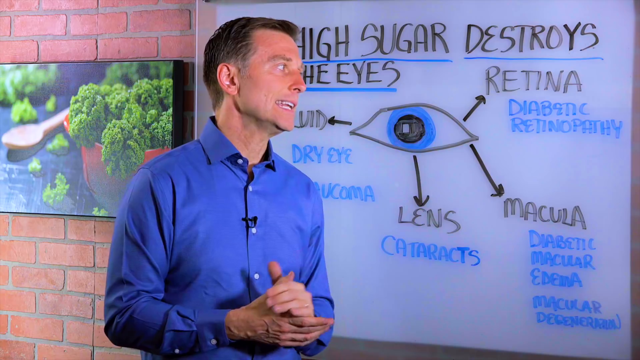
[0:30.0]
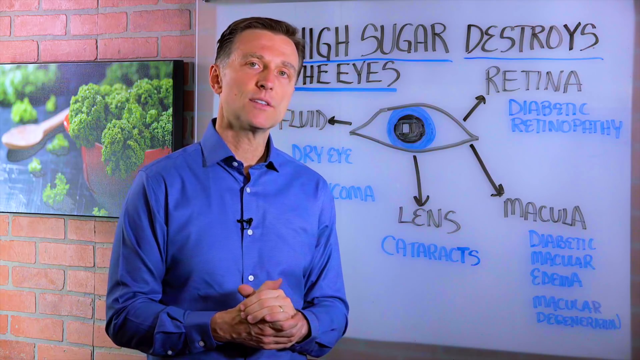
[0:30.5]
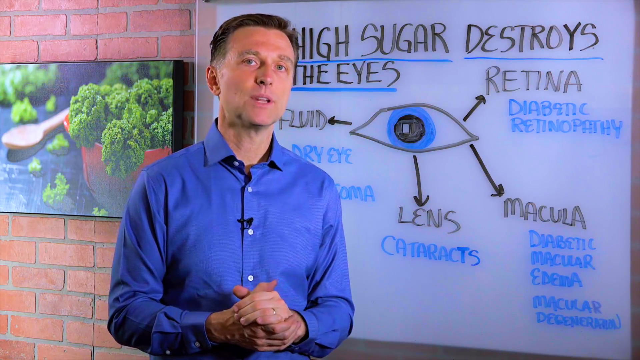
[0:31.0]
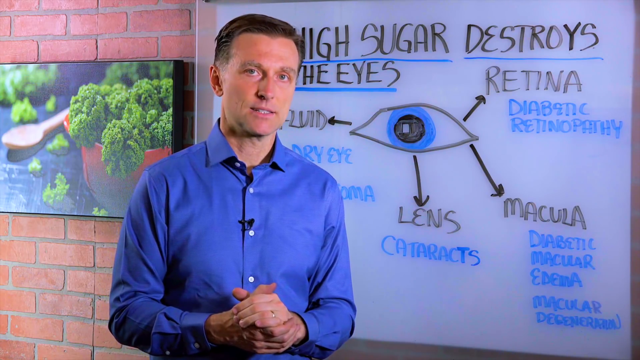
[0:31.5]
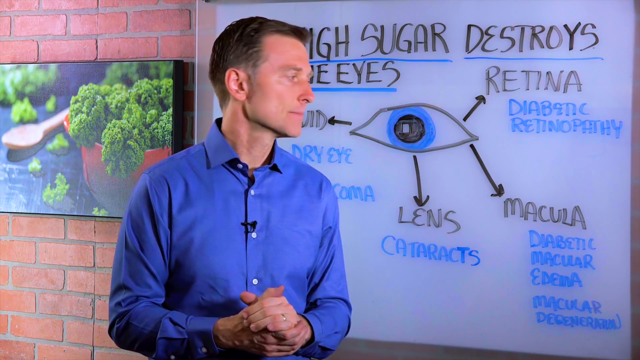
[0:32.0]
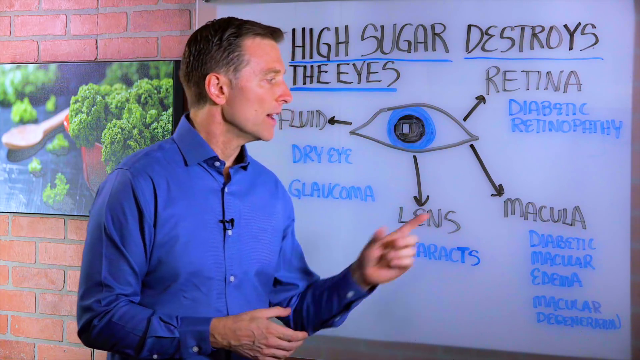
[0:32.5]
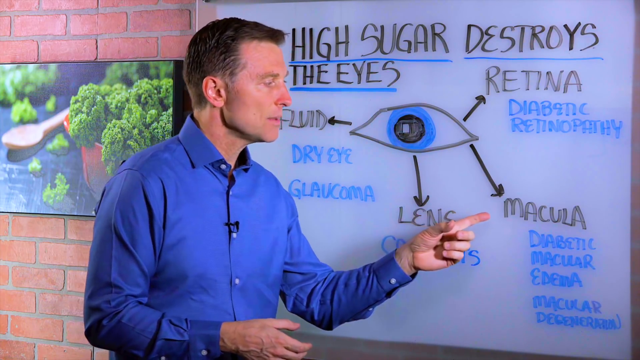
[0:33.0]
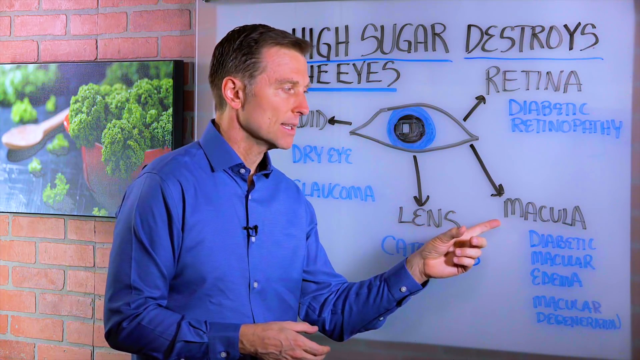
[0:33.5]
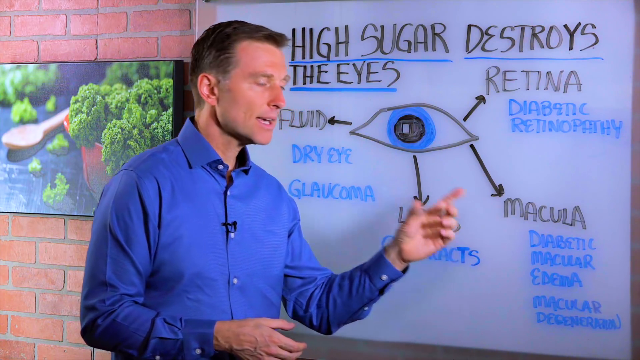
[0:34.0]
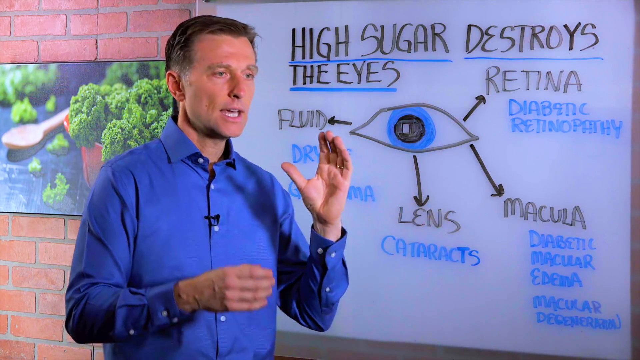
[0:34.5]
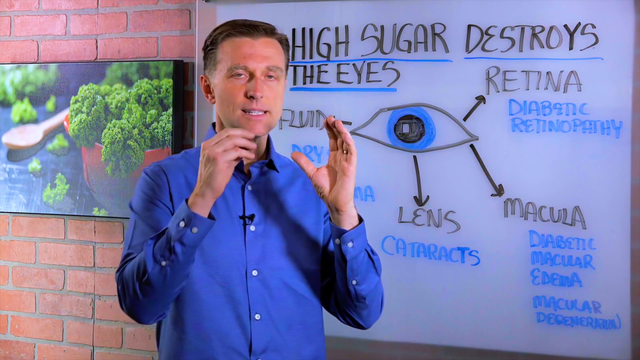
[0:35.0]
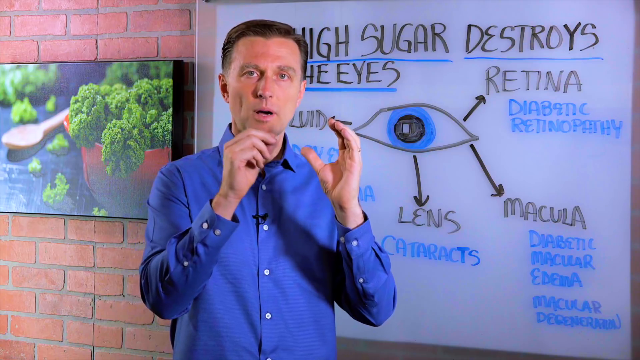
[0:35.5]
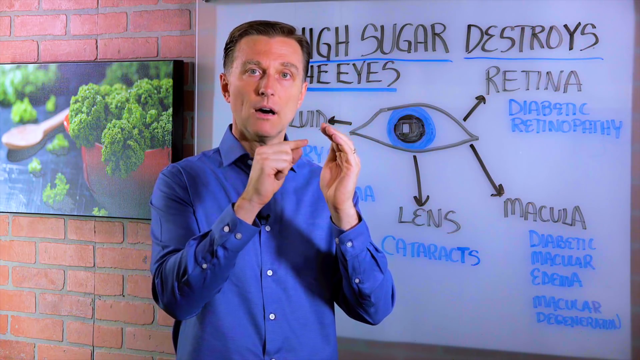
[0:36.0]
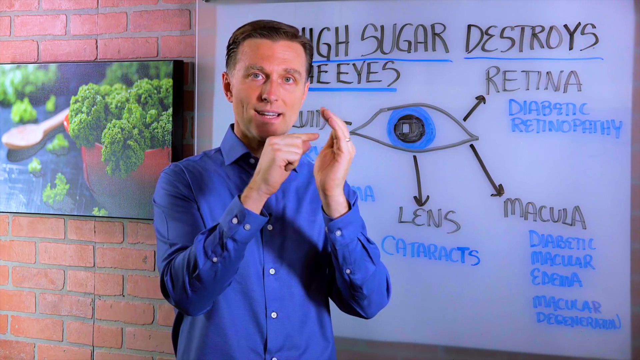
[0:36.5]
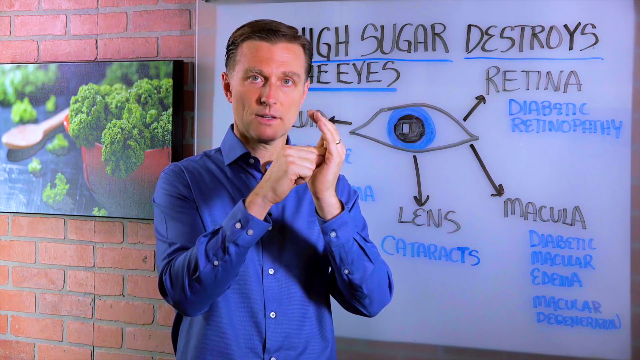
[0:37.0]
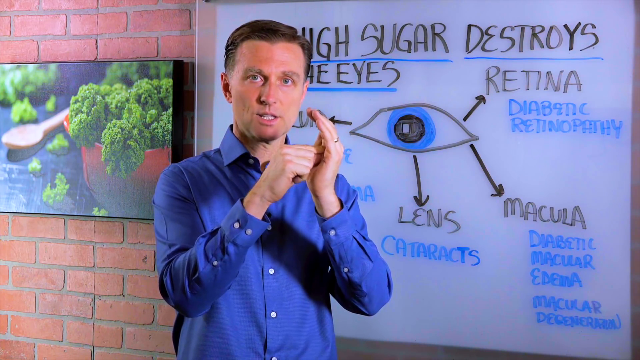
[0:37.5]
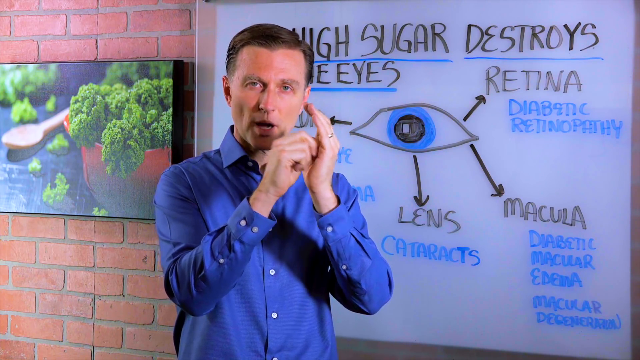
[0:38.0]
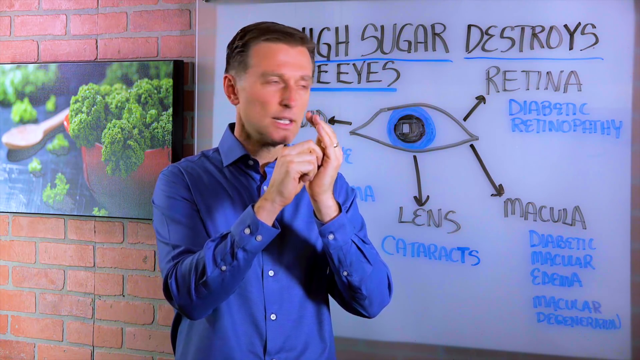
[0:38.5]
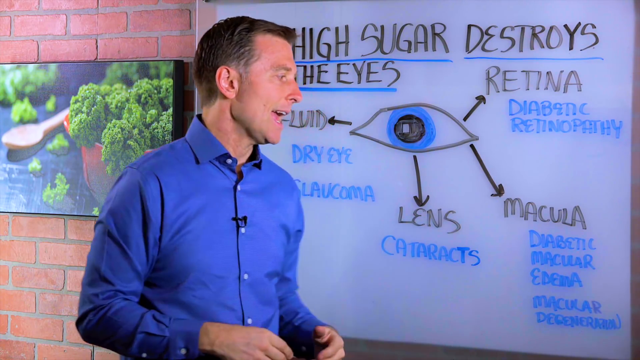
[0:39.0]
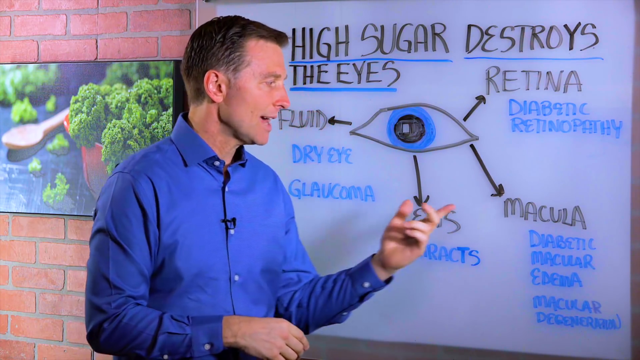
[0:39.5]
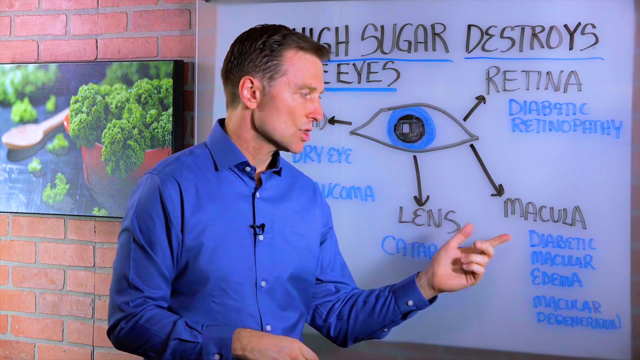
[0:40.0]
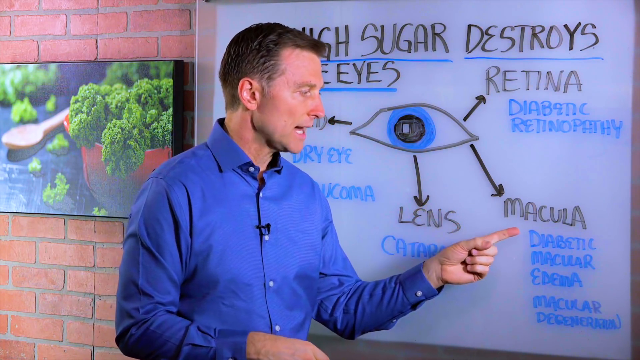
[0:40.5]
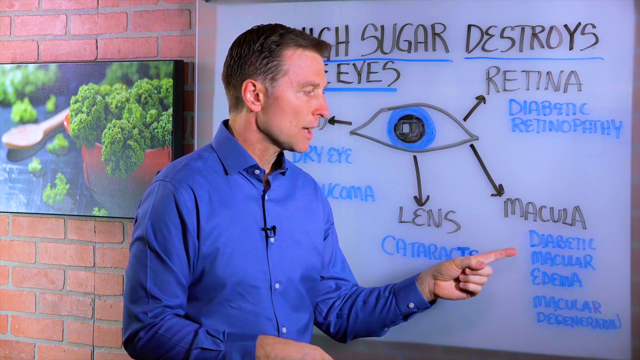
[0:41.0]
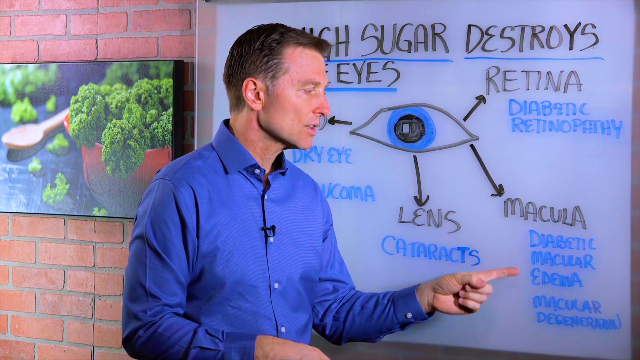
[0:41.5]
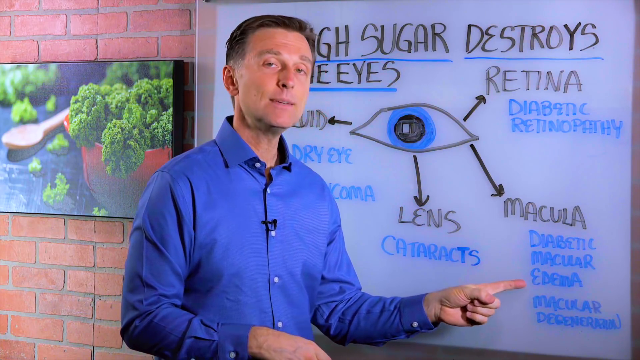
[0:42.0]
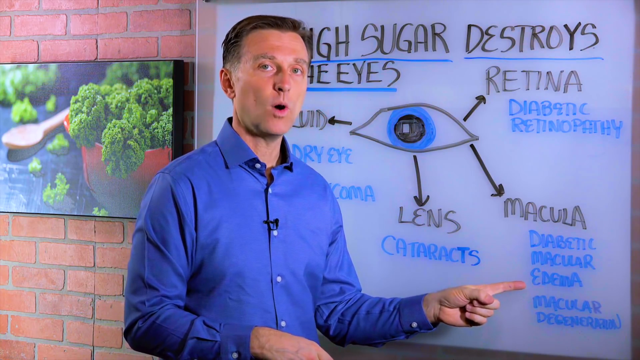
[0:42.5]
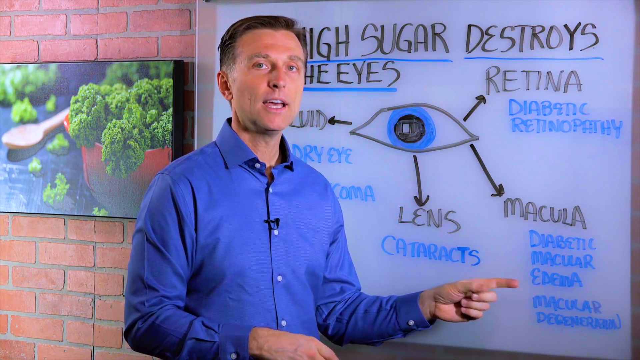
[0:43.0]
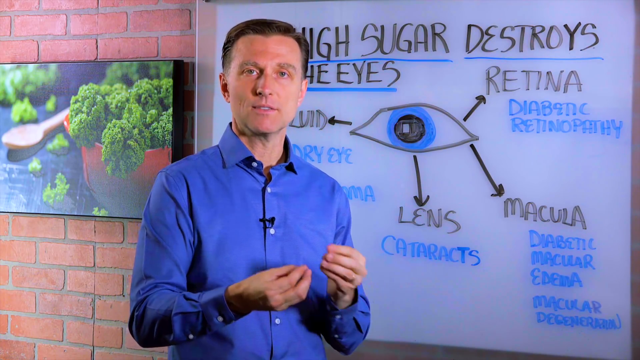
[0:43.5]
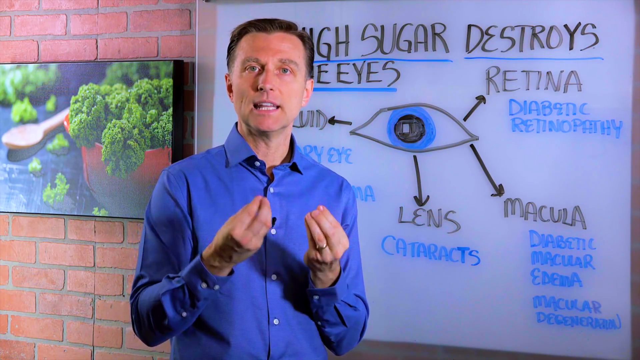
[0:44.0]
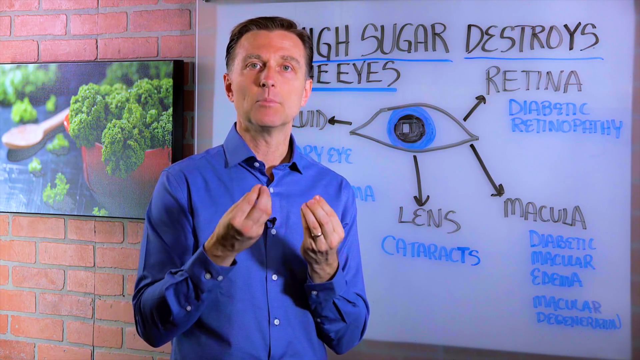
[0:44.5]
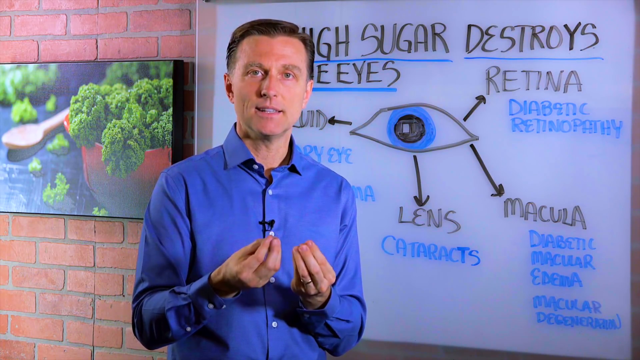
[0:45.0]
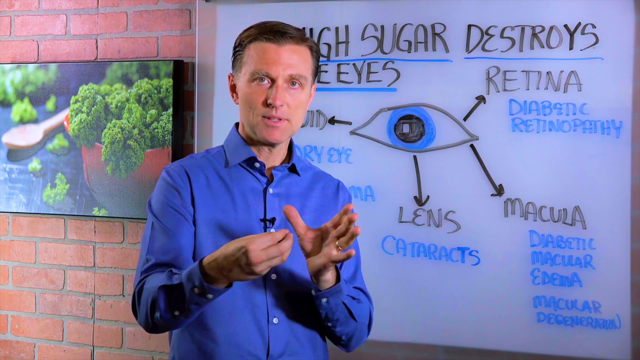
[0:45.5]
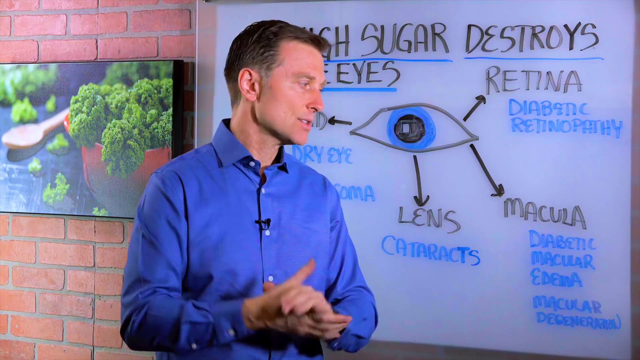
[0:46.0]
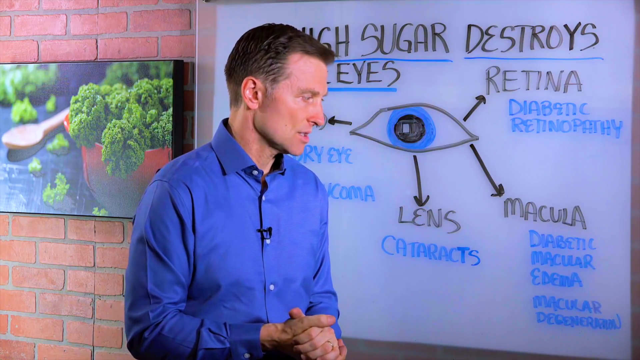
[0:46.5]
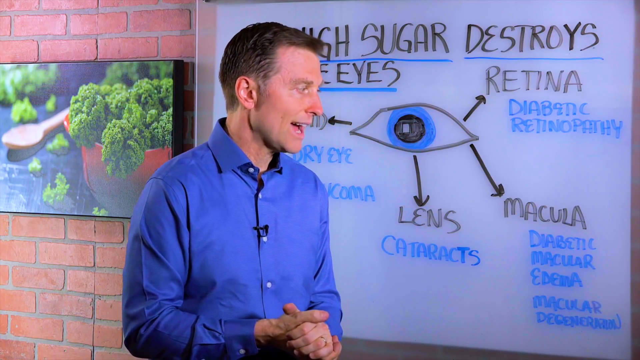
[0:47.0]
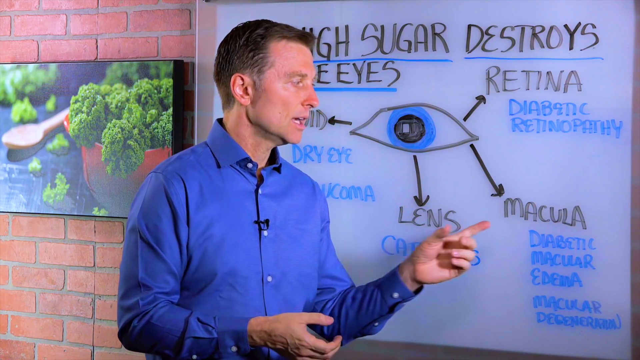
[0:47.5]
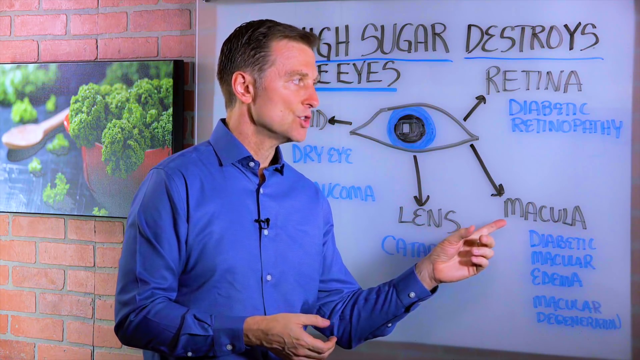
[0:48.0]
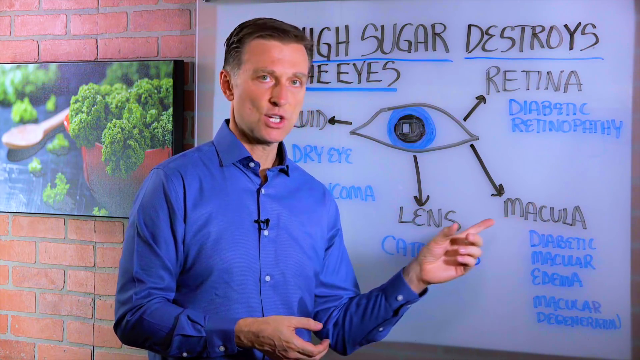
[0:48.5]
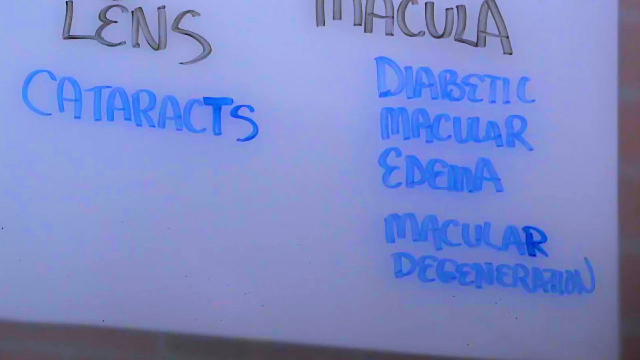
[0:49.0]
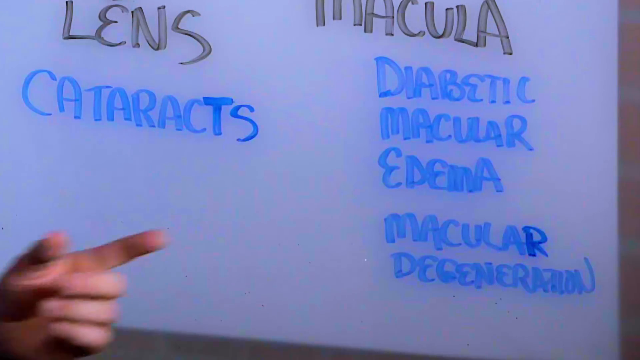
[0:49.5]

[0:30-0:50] Dr. Berg is seen from the waist up in a collared blue button-down shirt. He is neatly dressed, with short dark hair and a clean-shaven face. He looks toward the whiteboard behind him, turning slightly to his left, his head going back and forth. With his left pointer finger he points to the word "macula" on the eye diagram, then goes through each word, pointing with the same finger, and the video cuts to the word "macula." On the board is a diagram of one blue eye, and above it "high sugar destroys the eyes" is written in black marker, underlined in blue dry erase marker. Arrows lead to the words "fluid," "lens" and "macula" to the lower right and "retina" to the upper right.